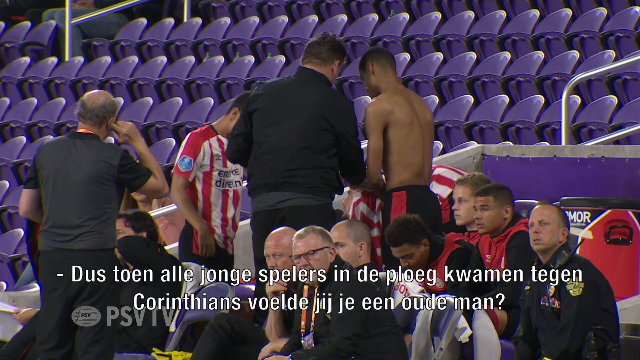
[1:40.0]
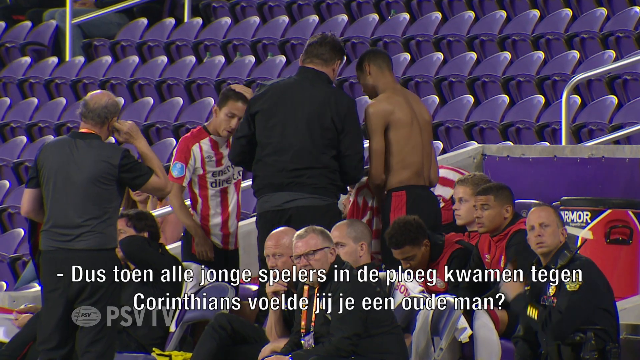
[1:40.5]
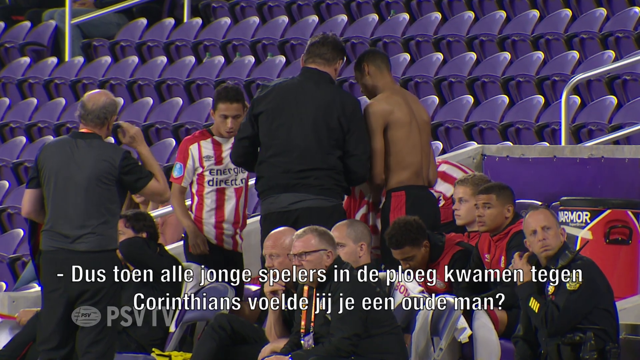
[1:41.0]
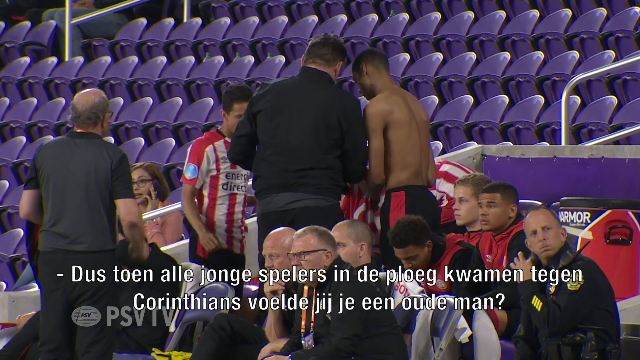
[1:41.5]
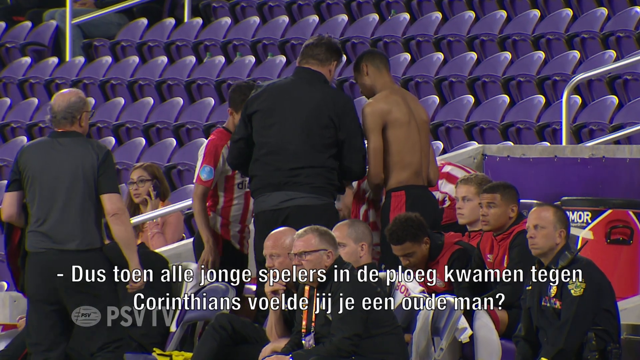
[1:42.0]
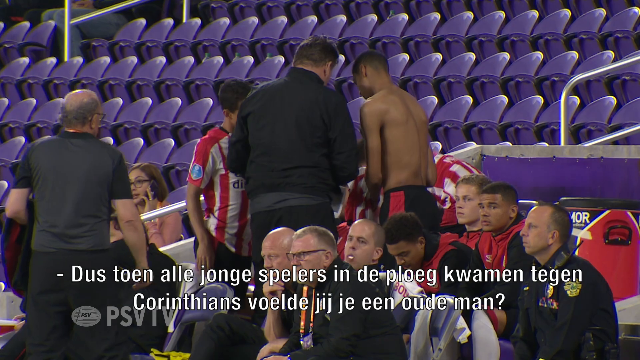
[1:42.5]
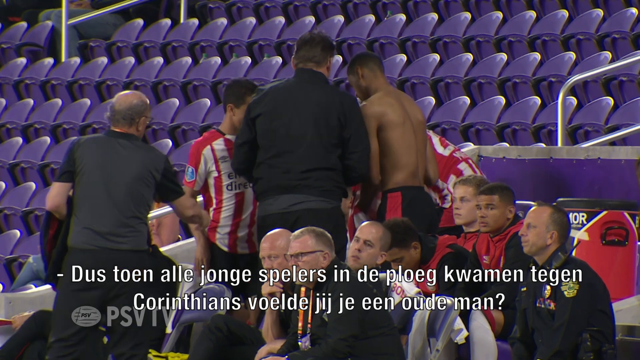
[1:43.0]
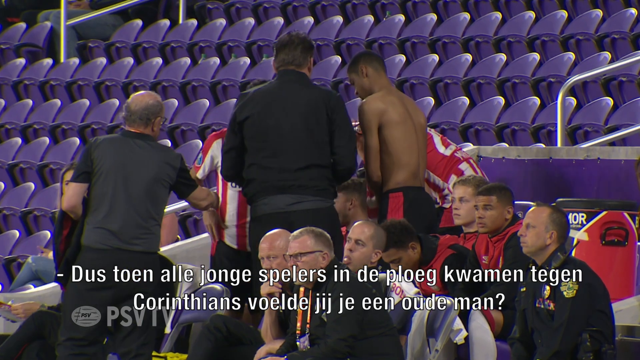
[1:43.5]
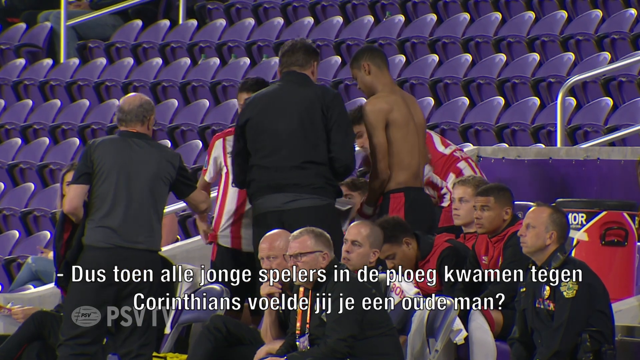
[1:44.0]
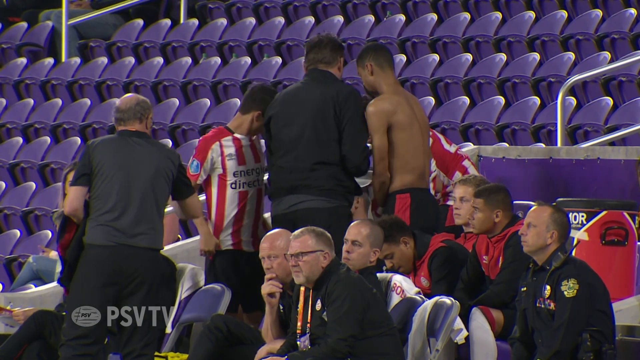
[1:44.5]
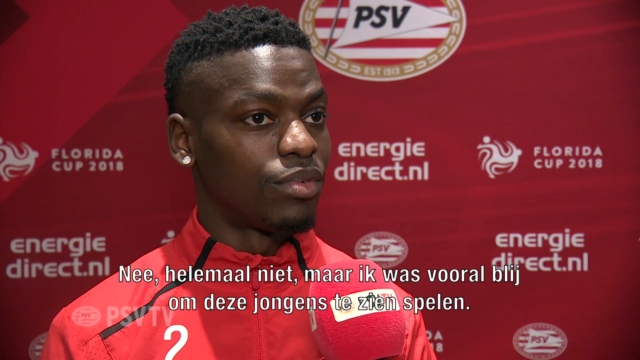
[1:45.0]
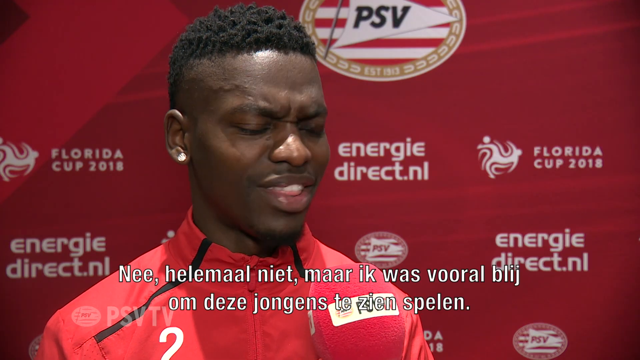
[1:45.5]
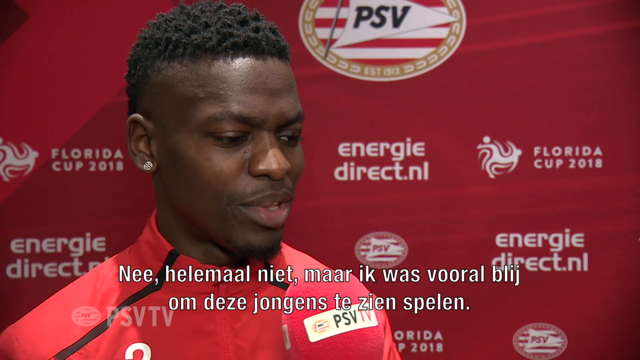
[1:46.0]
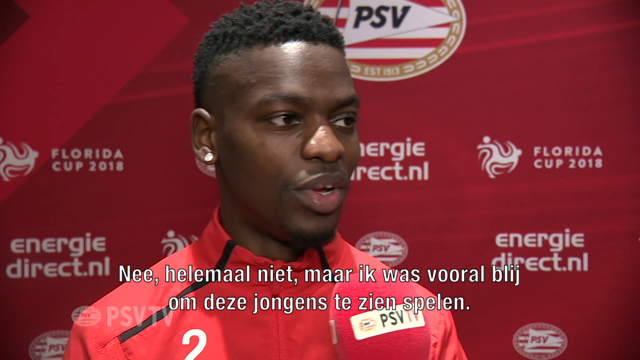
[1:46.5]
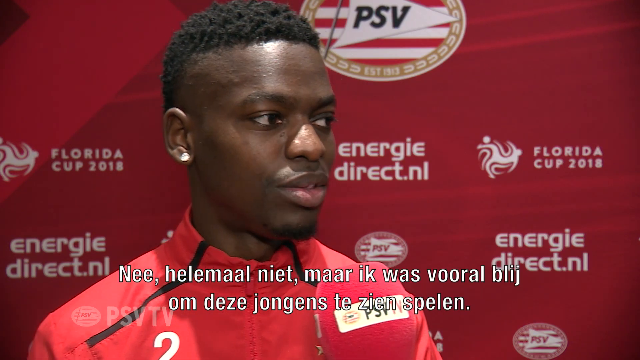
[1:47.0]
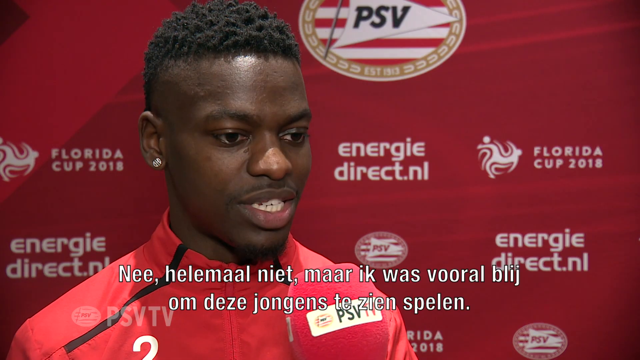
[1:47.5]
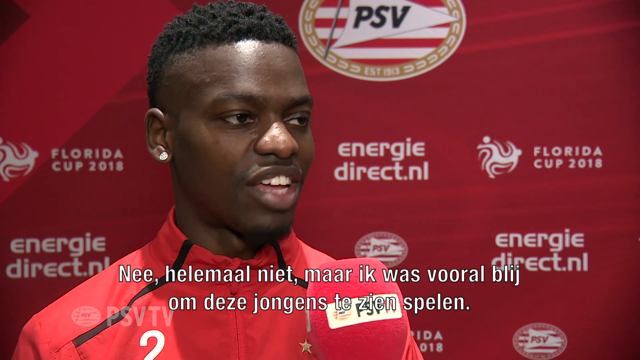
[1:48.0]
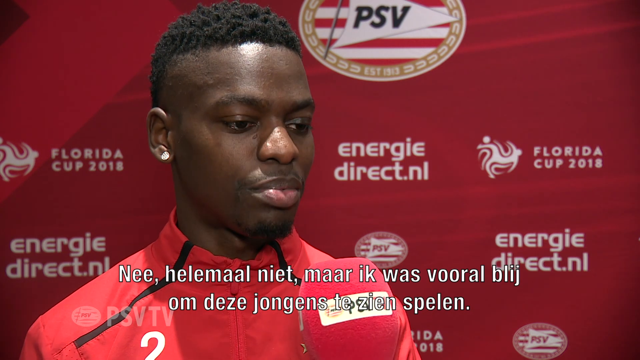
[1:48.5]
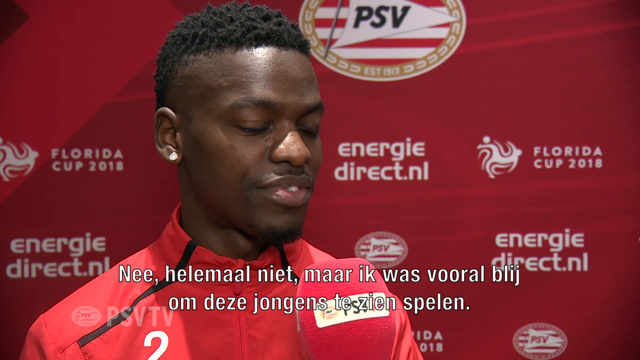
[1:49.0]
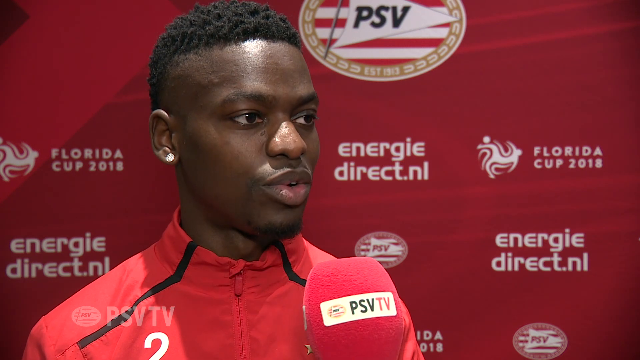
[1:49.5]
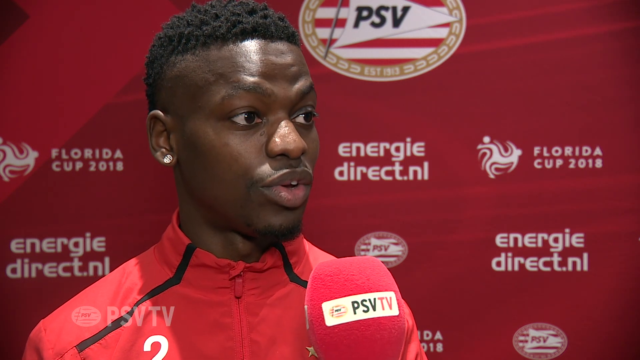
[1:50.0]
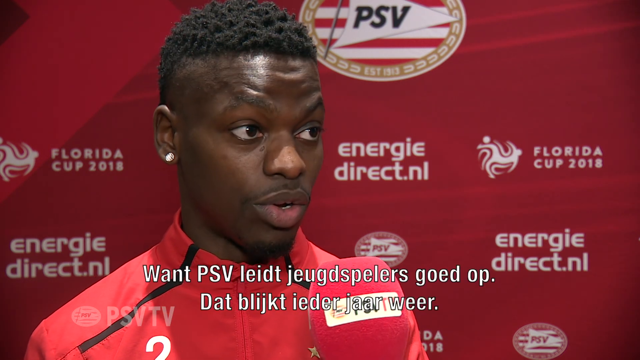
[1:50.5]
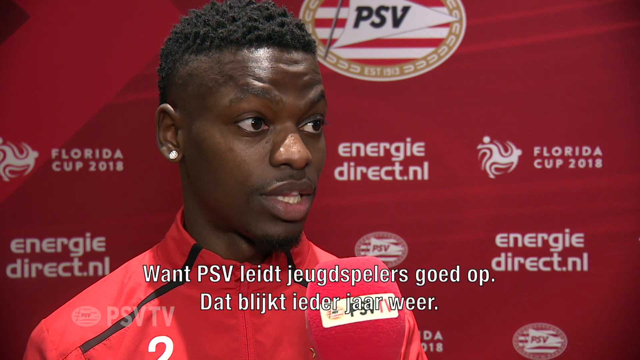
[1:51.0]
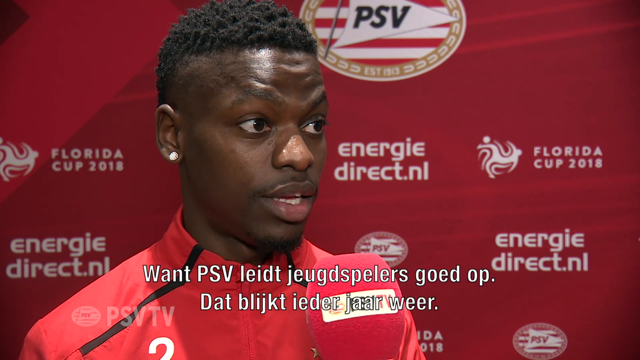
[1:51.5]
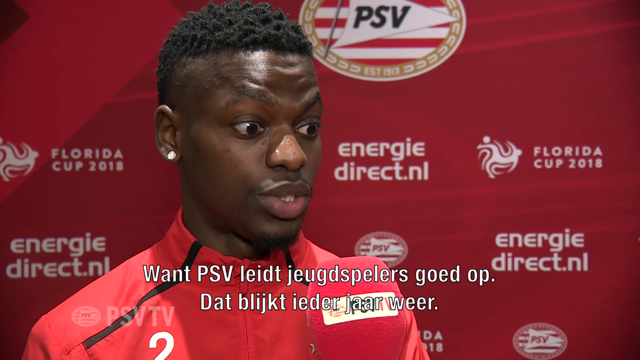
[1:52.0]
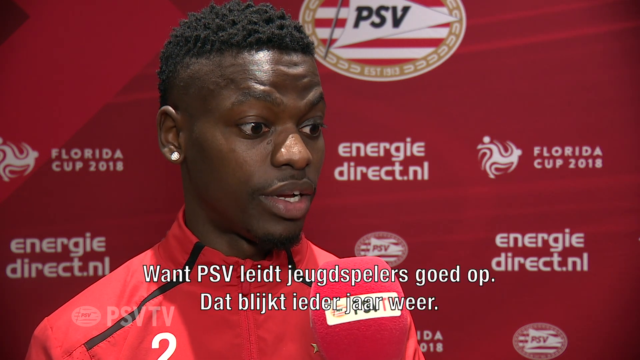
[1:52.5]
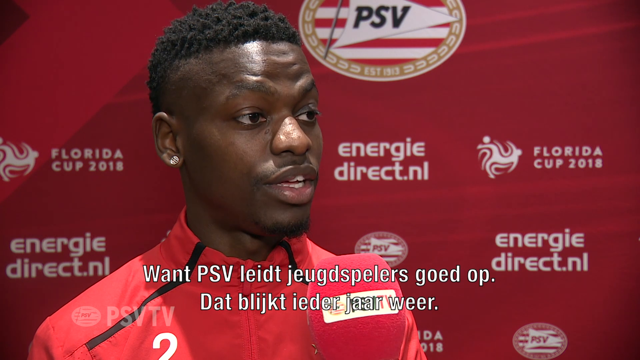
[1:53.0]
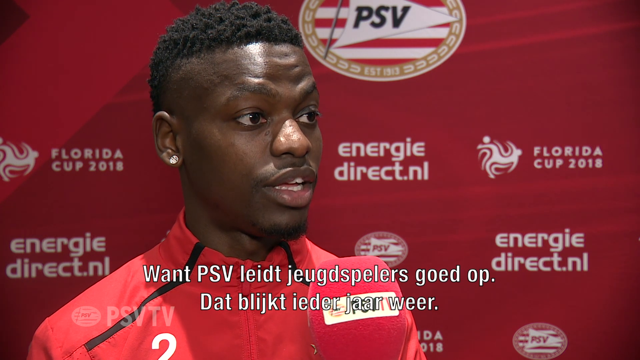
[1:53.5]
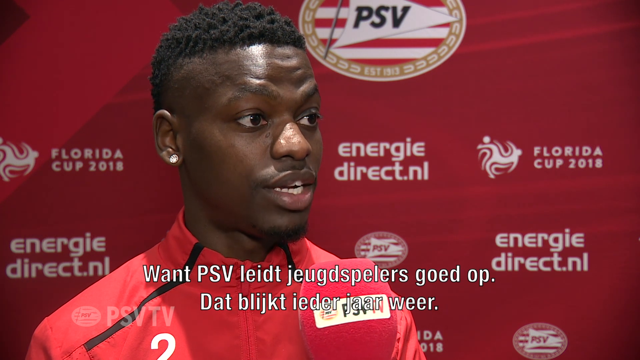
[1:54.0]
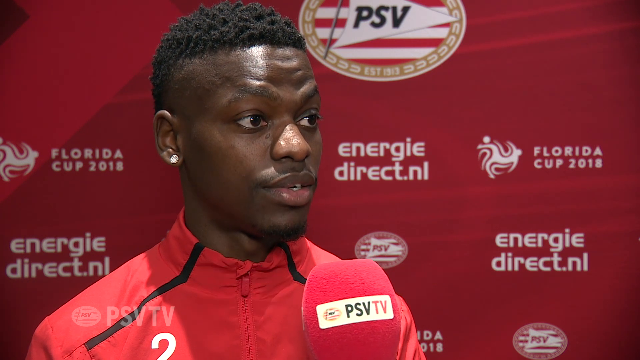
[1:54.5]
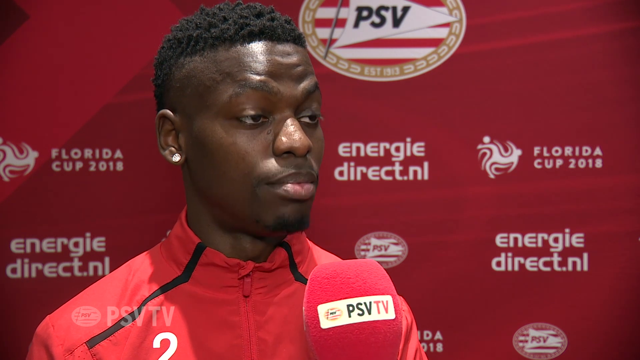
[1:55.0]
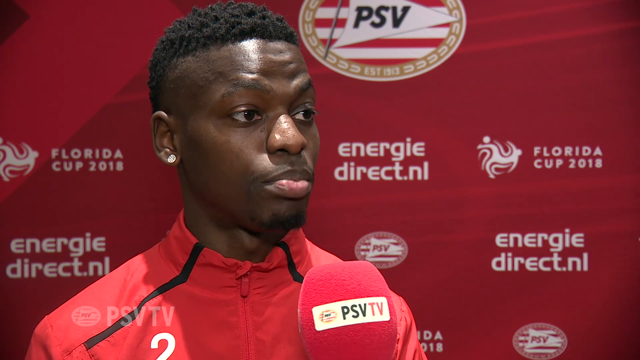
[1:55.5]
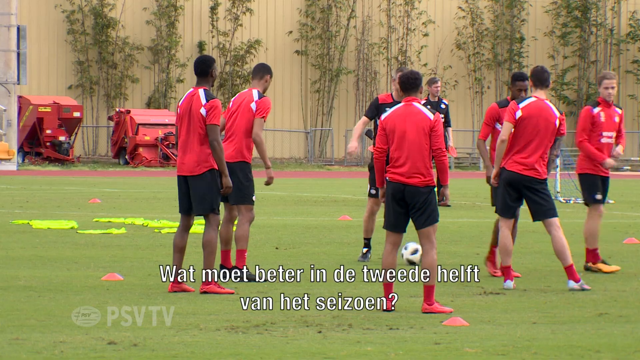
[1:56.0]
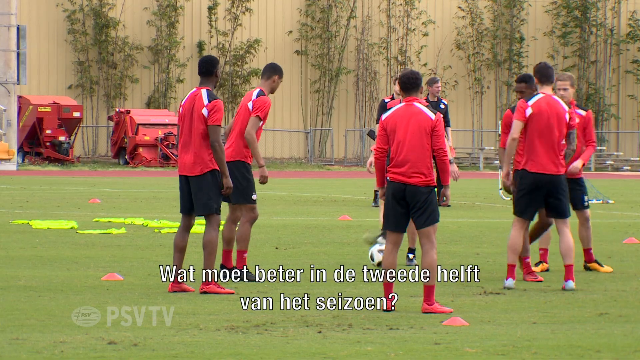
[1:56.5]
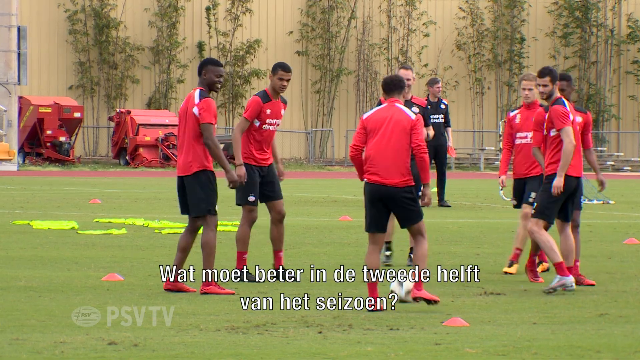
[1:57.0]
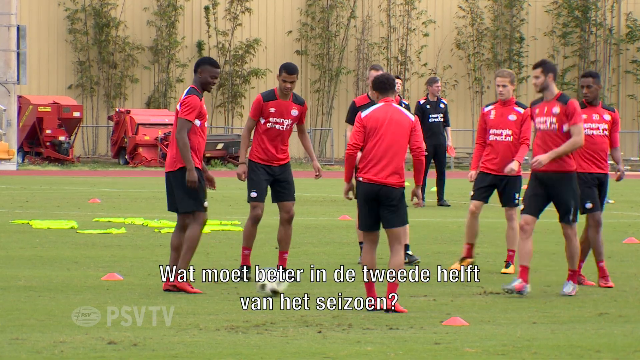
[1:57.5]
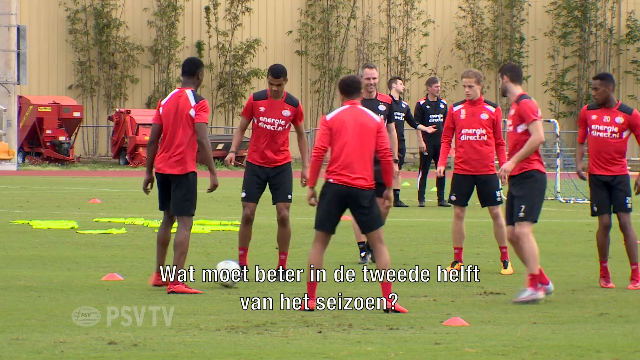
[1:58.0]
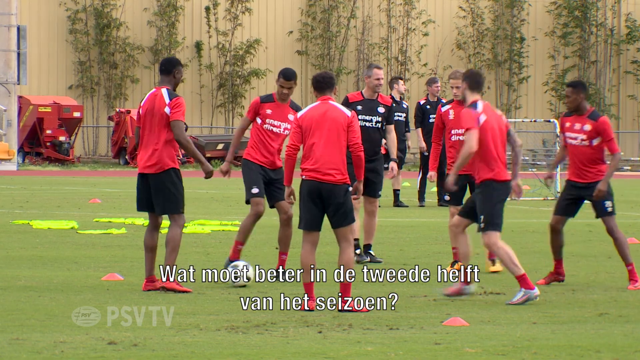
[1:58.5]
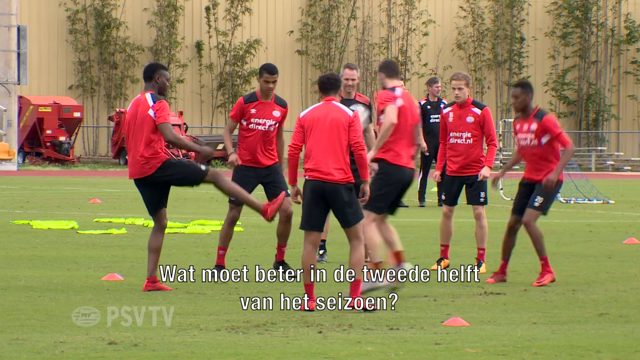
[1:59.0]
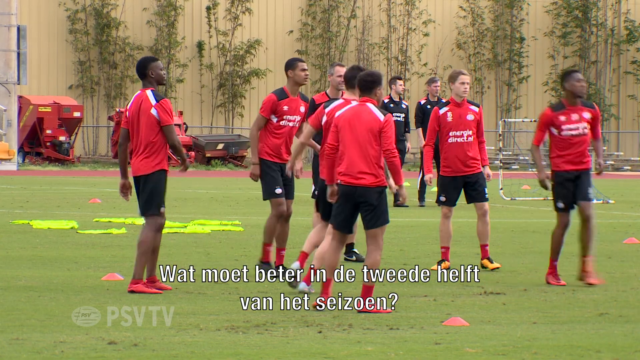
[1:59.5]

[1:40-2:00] Some soccer players are up in the stands, on the side of the stadium with blue seats. The video cuts to an African American player with studded diamond earrings being interviewed with a red microphone. Behind him the team is practicing, kicking the ball around and warming up; the players stand in a sort of circle, kicking balls back and forth to each other. The sign behind the interviewed man says "EnergyDirect.nl" and "Florida Cup 2018", with an emblem of a soccer player kicking the ball up into the air as he falls backwards.